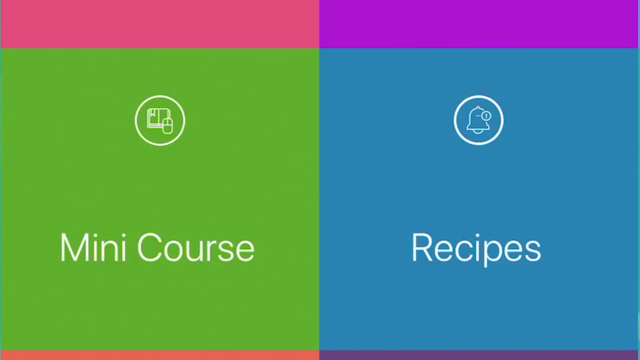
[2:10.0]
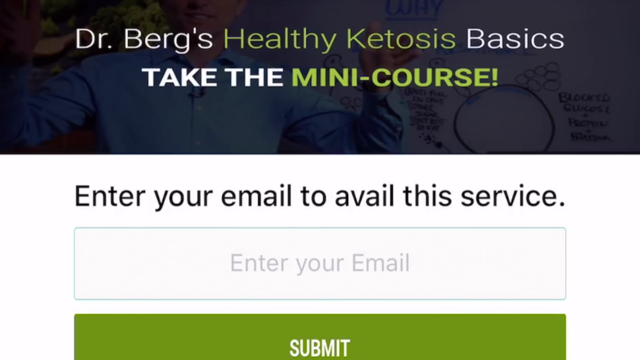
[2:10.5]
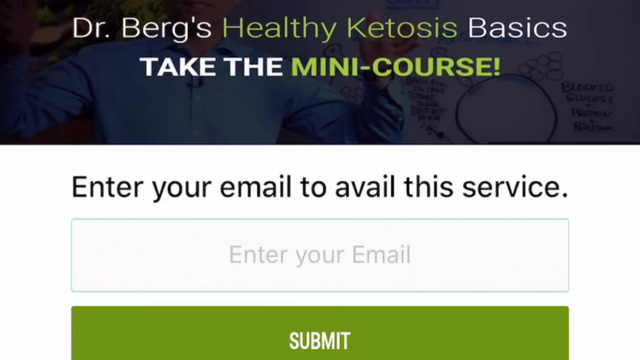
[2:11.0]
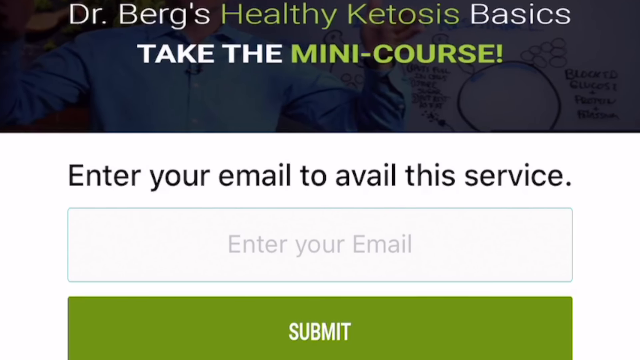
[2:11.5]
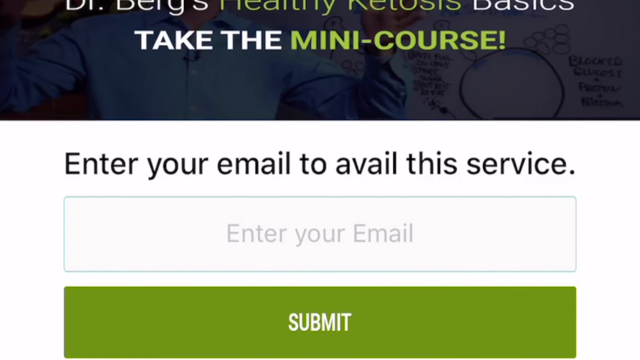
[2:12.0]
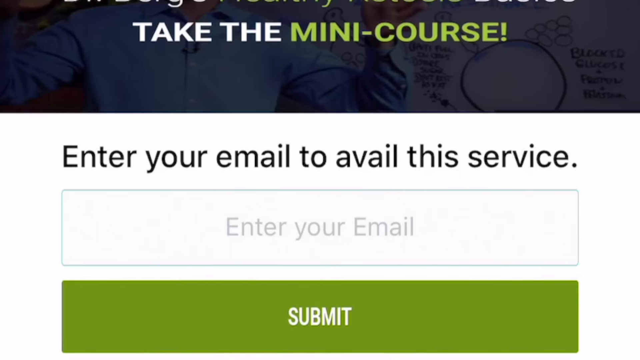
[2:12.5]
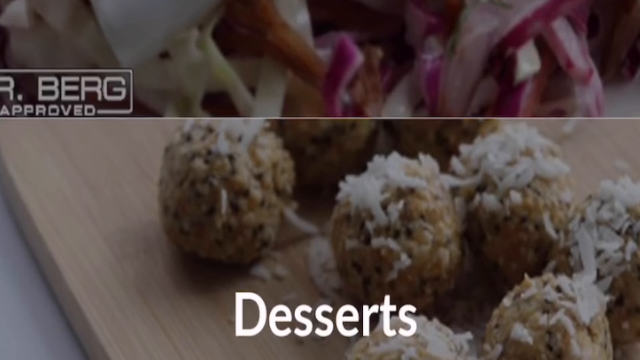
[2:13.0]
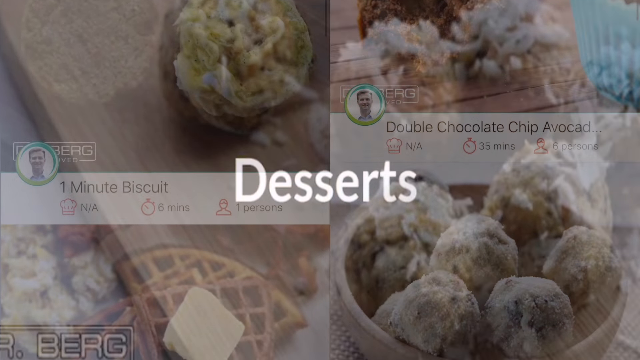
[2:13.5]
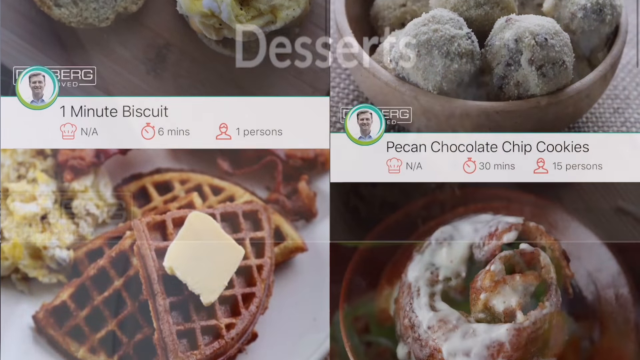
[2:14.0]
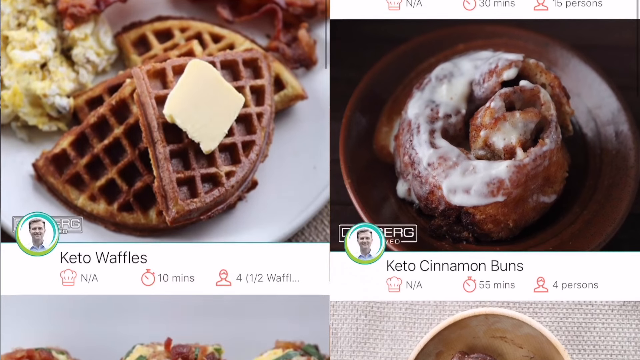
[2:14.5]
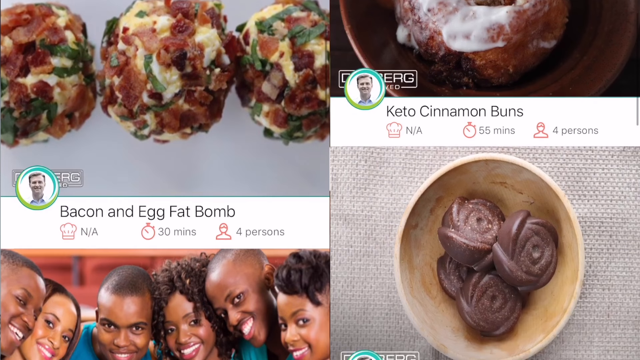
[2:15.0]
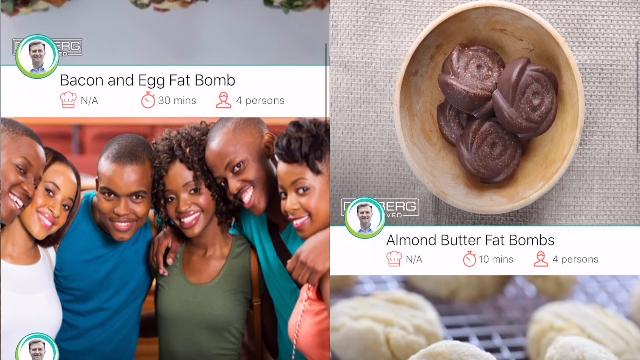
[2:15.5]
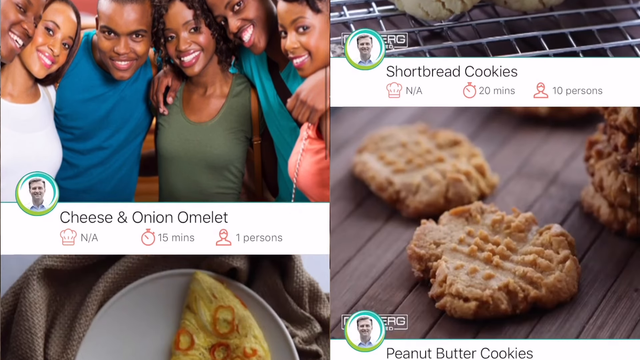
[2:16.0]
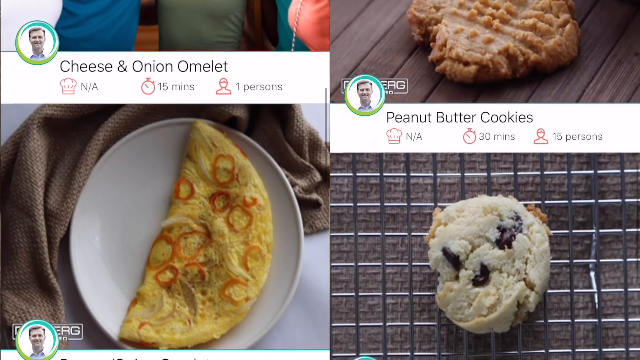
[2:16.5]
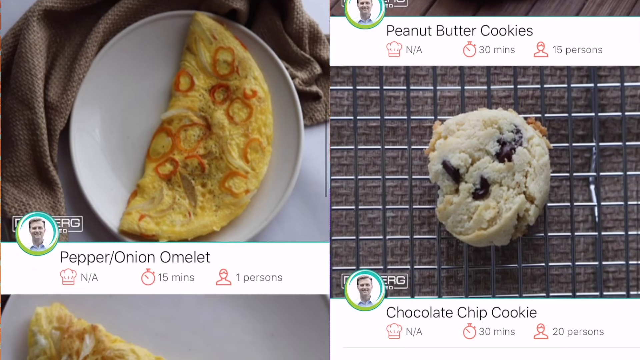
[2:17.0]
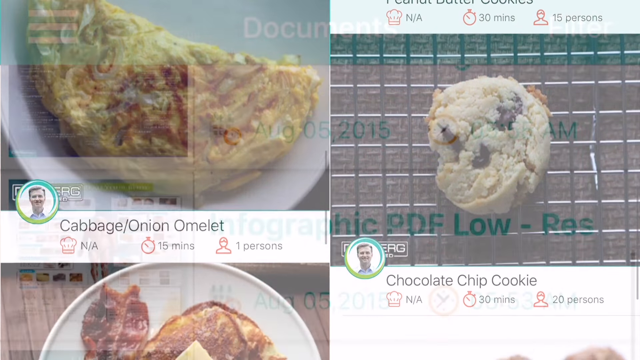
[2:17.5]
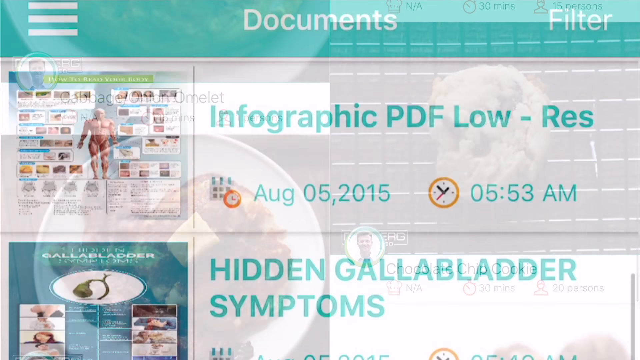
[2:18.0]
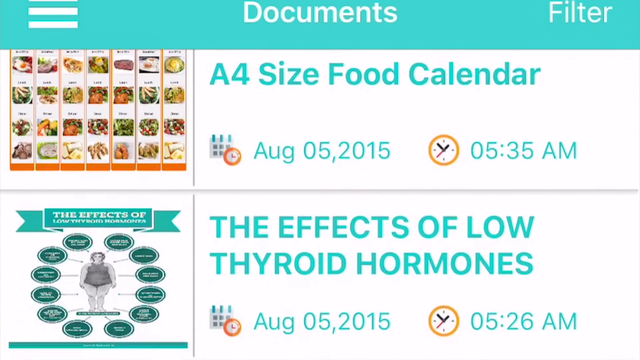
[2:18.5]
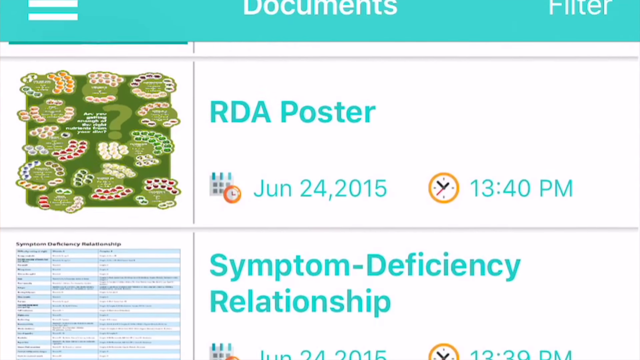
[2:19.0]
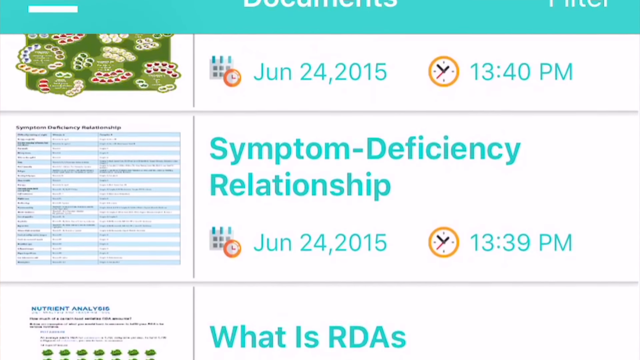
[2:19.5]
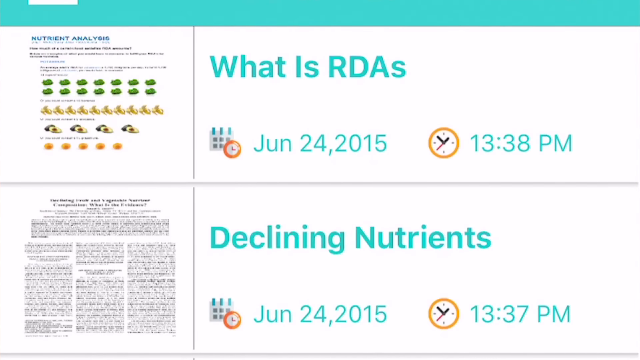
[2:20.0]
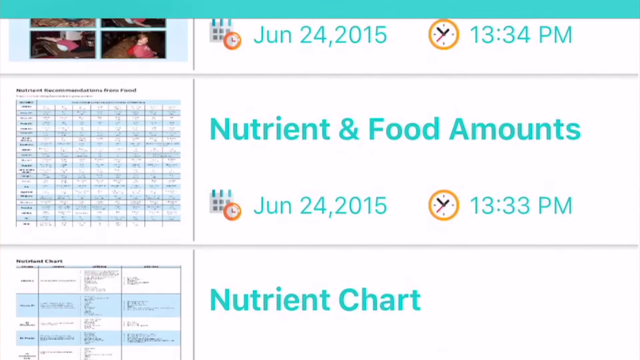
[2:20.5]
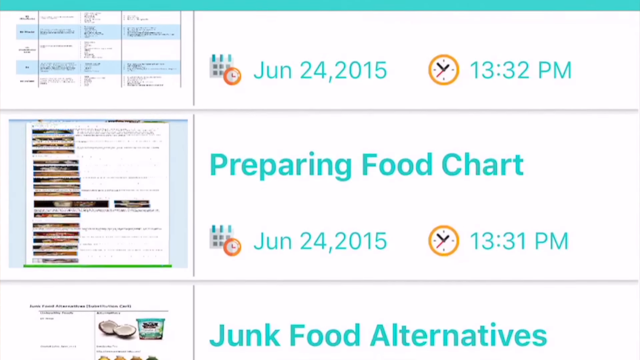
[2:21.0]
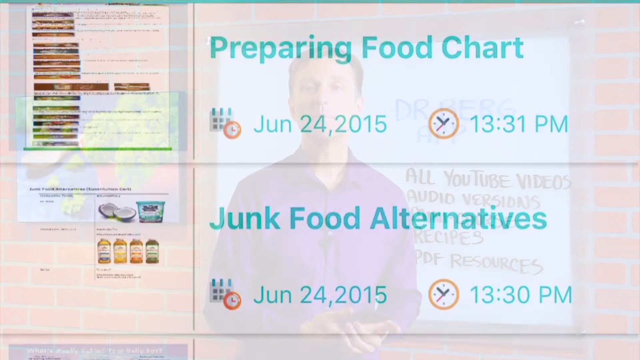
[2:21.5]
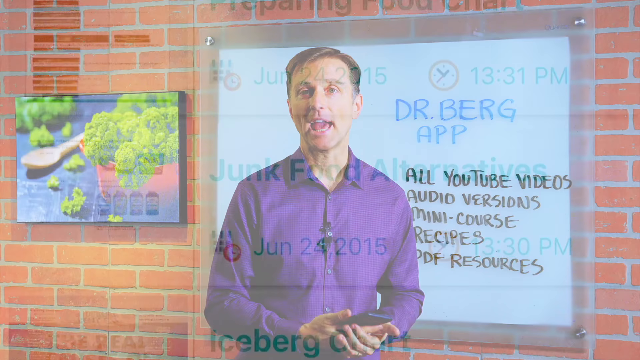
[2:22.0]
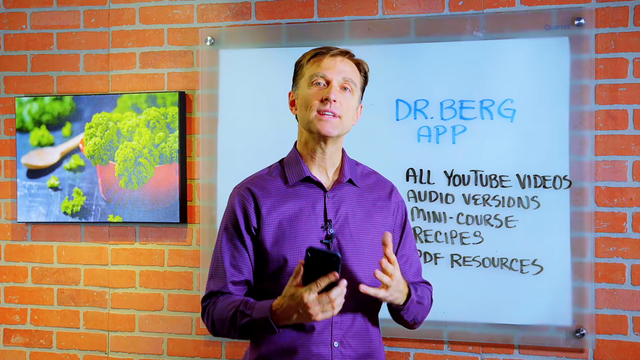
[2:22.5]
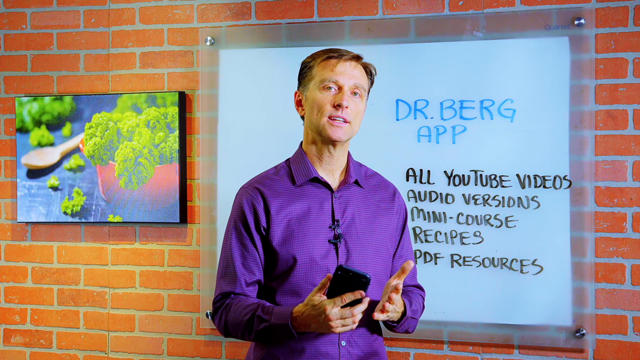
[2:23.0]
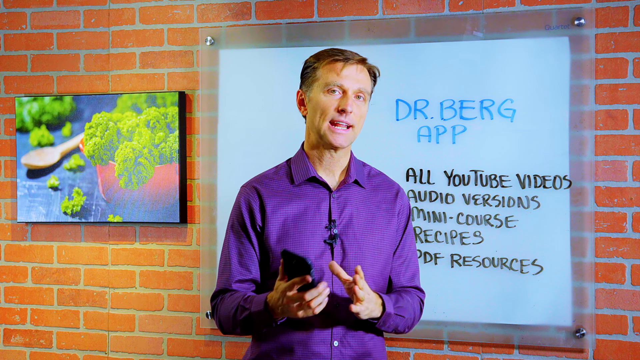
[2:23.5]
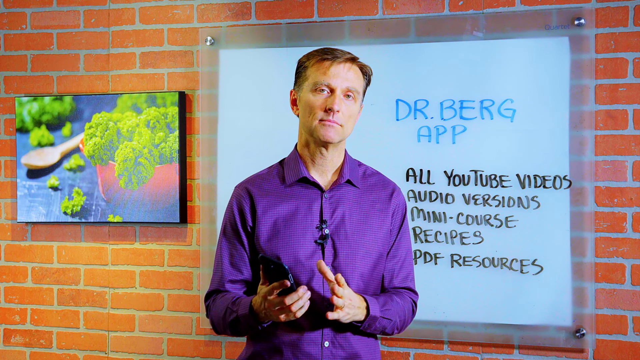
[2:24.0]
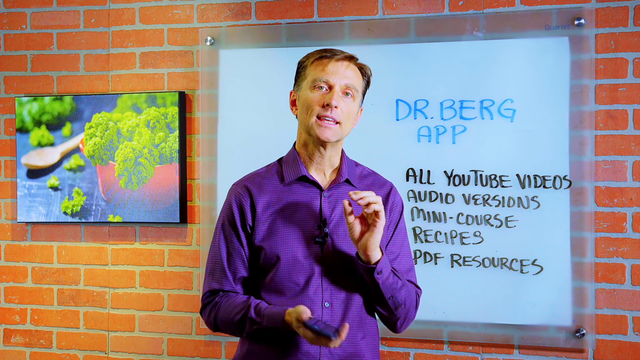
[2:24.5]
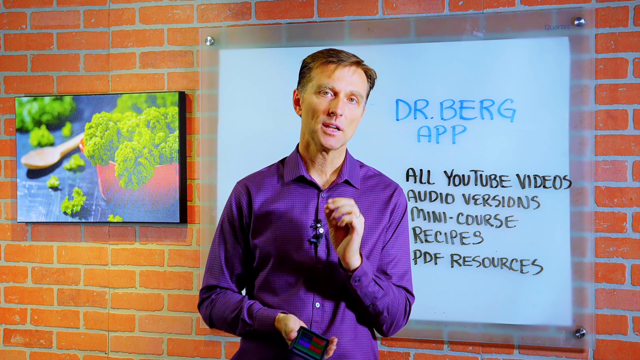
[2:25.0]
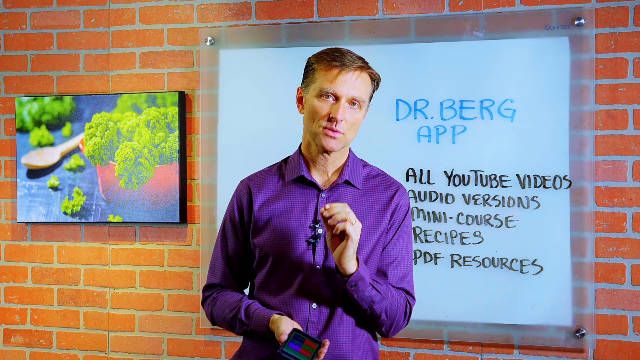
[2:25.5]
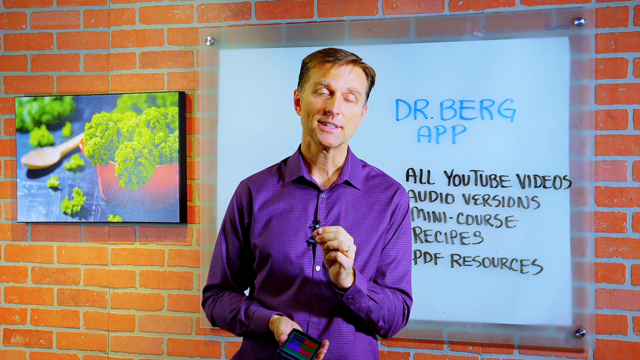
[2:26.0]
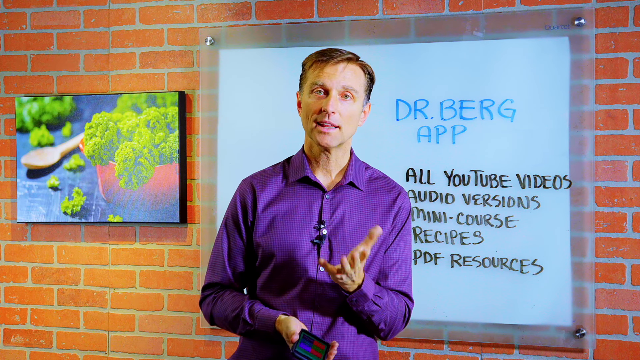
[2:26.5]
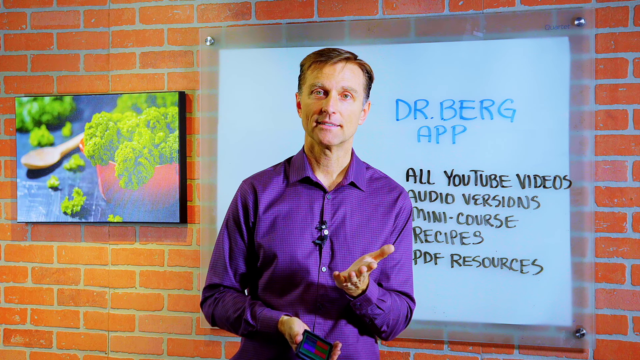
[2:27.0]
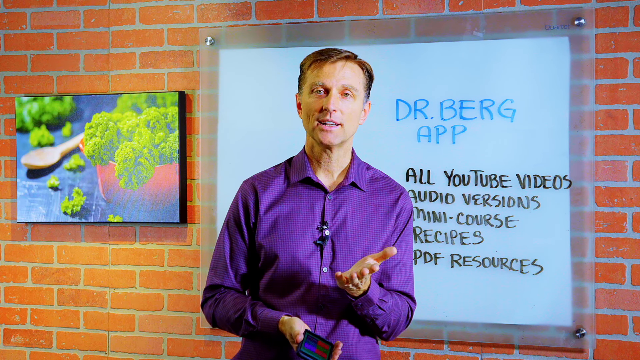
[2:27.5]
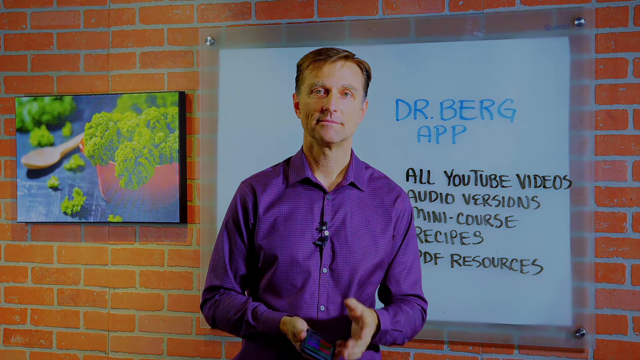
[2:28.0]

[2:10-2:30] A close-up of the smartphone app shows a green "mini course" button and a blue "recipes" button. The next screen shows a graphic with a dark banner reading "Dr. Berg healthy ketosis basics take the mini course!" and, below, black text on a white background reading "enter your email to avail this service", an "enter your email" box, and an olive green submit button. A tight shot shows food photos of maybe shredded red onion and some kind of meatball, maybe dusted with shredded cheese, with "Dr. Berg approved" readable in the top half of the photo. The title "dessert" is overlaid on a background of faded photos of various desserts, including a double chocolate chip, avocados and a one minute biscuit, and in the bottom left corner is an image of waffles with a pat of butter. The video scrolls through various items, including keto waffles, keto cinnamon buns, bacon and eggs, fat bomb, chocolate chip cookie, cabbage, onion and omelette. Next it shows various articles under the document menu, with topics including "the effects of low thyroid hormone", "symptom deficiency relationship" and "junk food alternatives." The video then returns to the man.